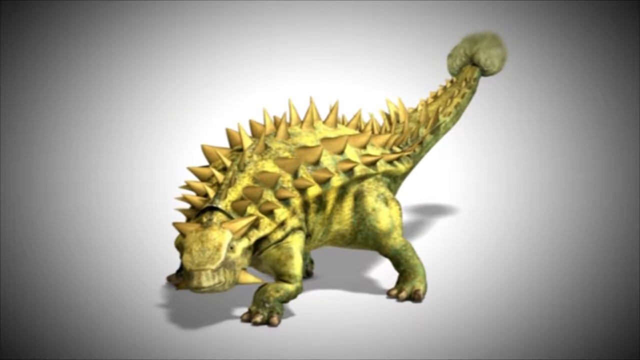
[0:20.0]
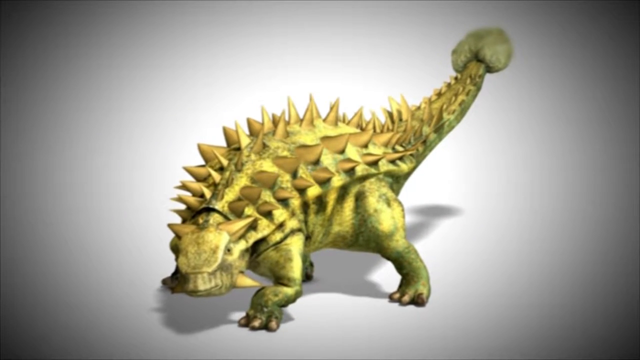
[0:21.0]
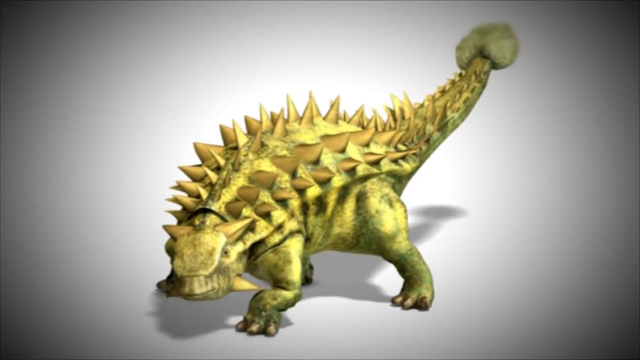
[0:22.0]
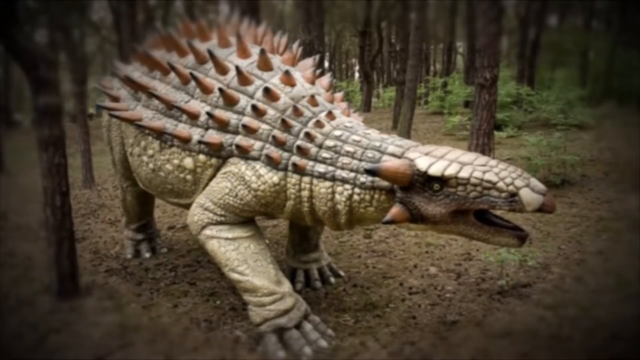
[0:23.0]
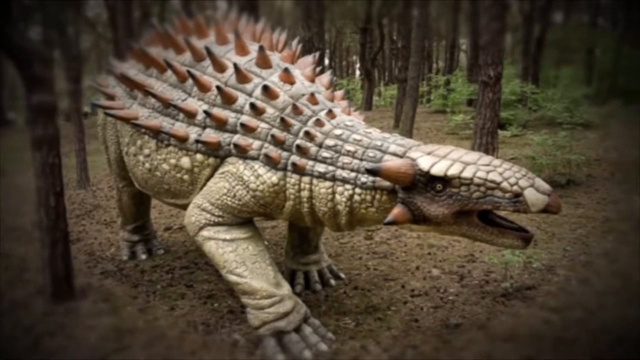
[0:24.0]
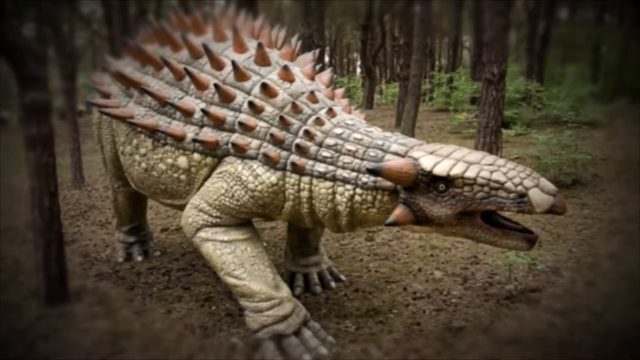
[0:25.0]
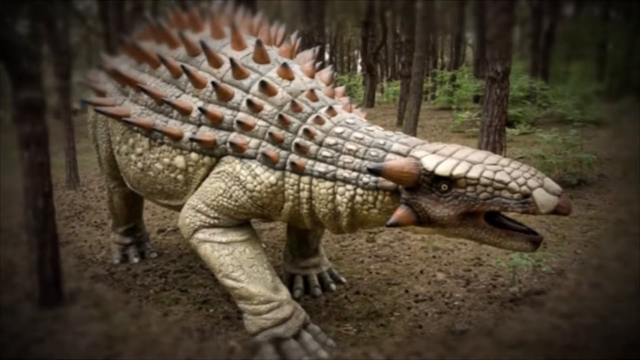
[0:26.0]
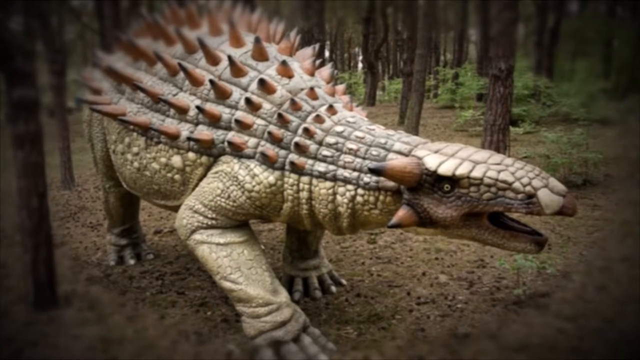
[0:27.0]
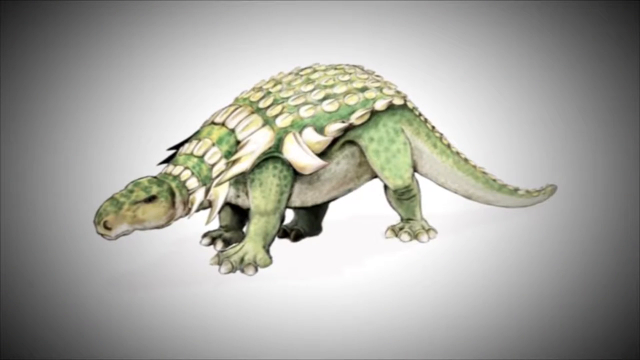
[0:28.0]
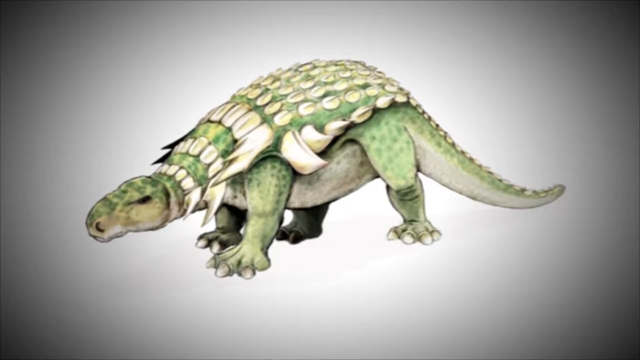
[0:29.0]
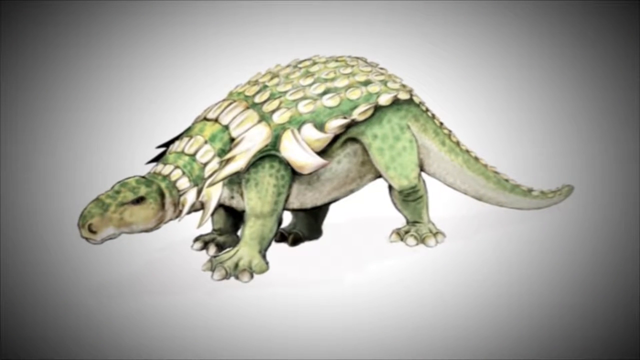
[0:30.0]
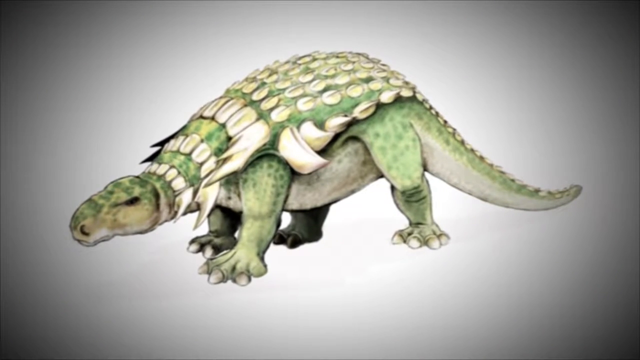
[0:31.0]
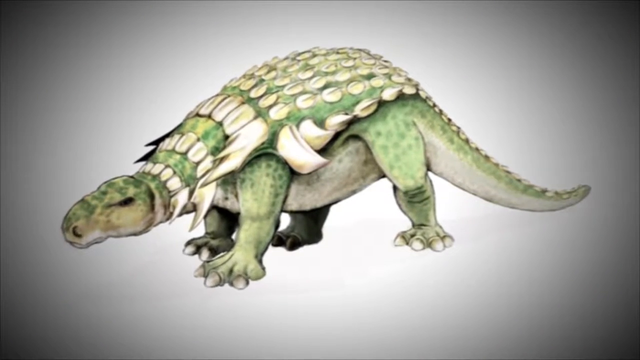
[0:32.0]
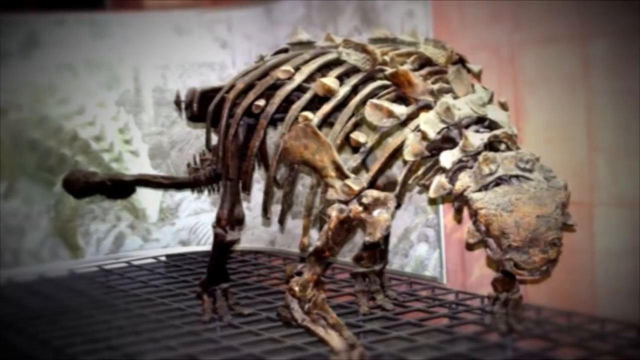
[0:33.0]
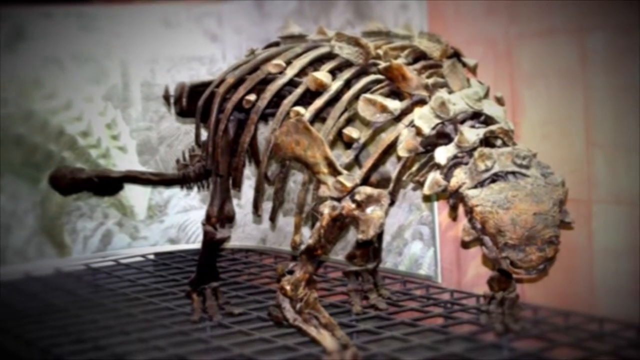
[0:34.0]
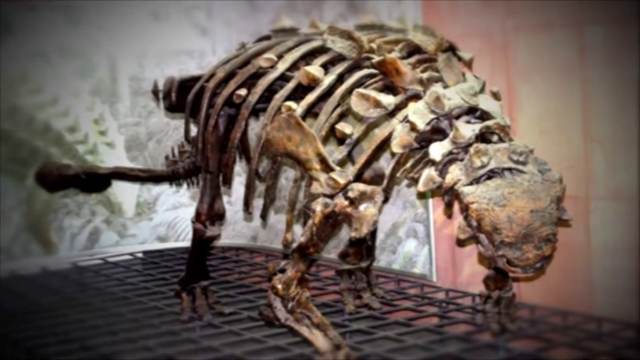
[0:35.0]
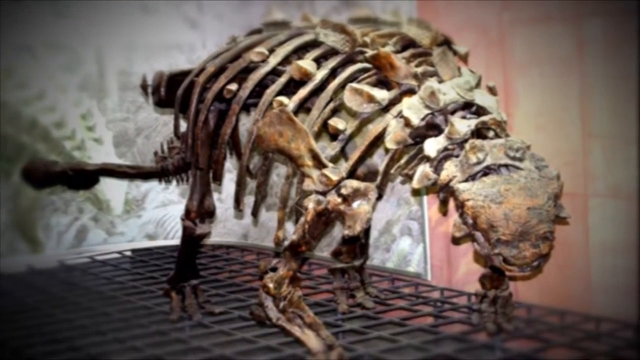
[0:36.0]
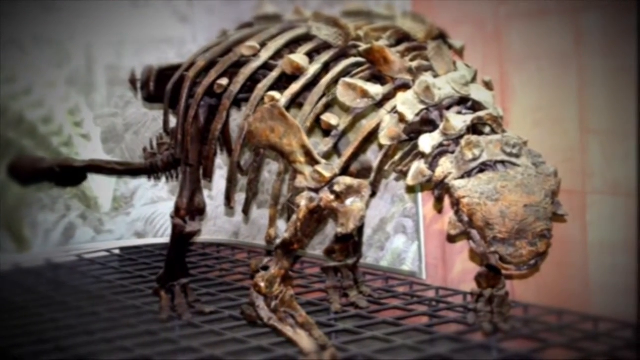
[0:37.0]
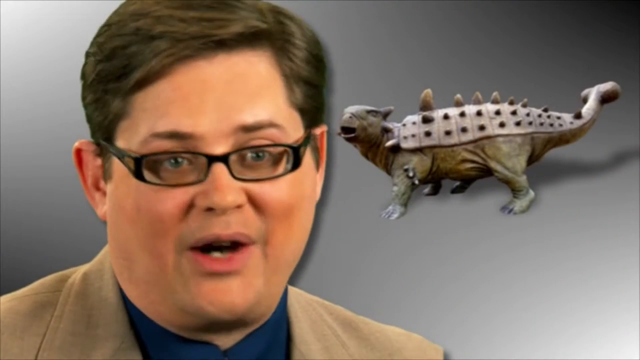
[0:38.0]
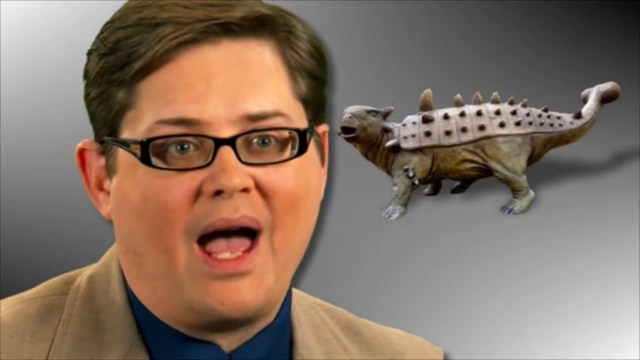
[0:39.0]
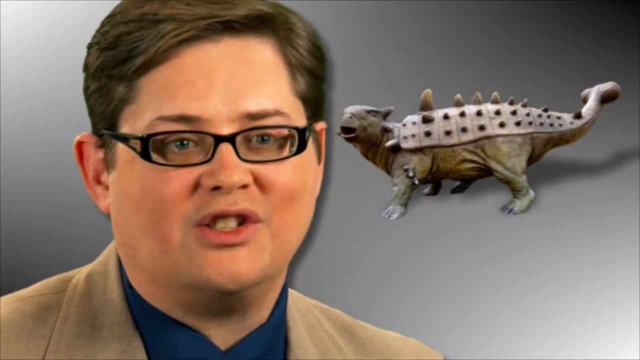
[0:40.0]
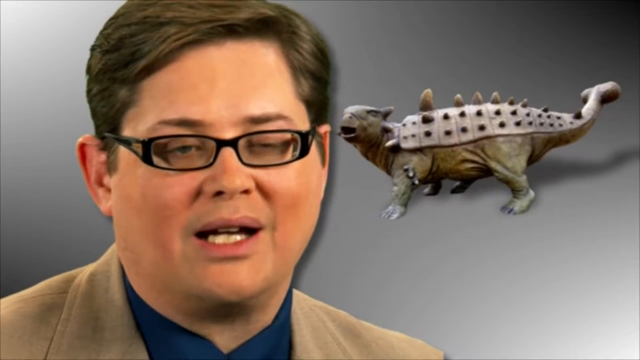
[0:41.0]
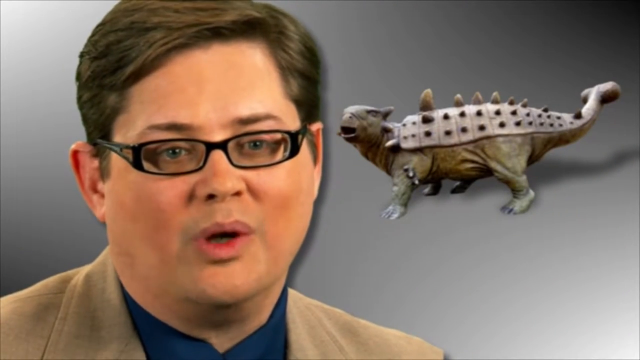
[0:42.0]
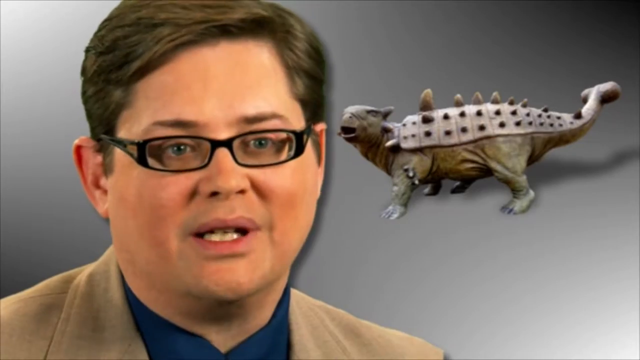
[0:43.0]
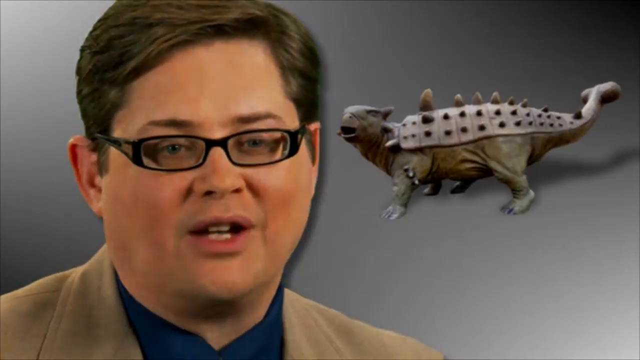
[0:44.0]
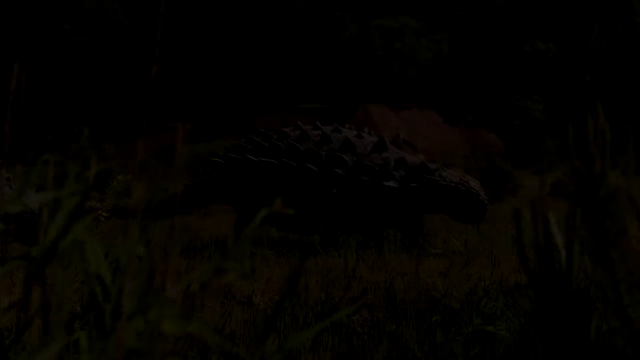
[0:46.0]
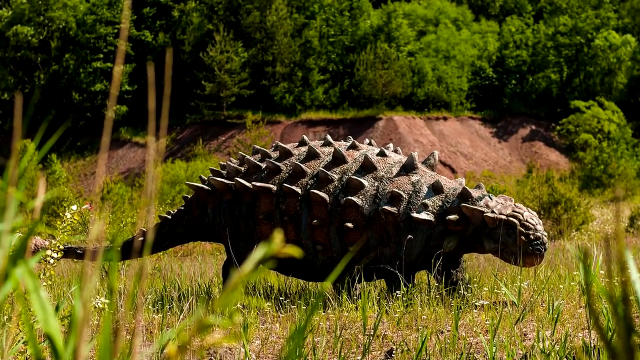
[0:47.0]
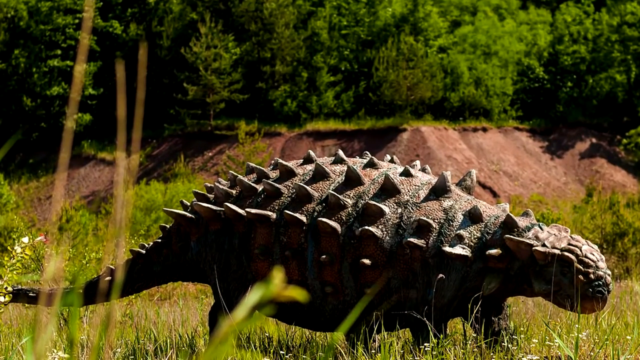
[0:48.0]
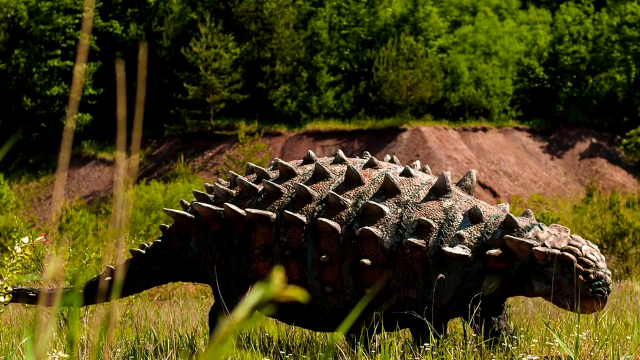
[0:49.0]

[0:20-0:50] A computer-generated drawing of the dinosaur is shown. The tip of its tail is almost heart-shaped, with two large bulbs on either side that extend into a point. The muscular legs are visible, along with four spikes extending from the head, two on top and two smaller ones on the bottom. Another image shows the dinosaur in a forest, depicting how it would look in today's world. The animal is pretty large, reaching about halfway up the large trees surrounding it. Its head, with its long snout, almost resembles an anteater's. A grid-like pattern is visible on the back and head where the spikes come out, with one spike on each square. Another drawing of the dinosaur, colored green, is shown. Then the fossilized dinosaur displayed in the exhibit appears, showing the flat part of the face, the arch in its back, and its short stubby legs. The man who was speaking before is shown again, along with the same image as before of the dinosaur walking in the grassy landscape.